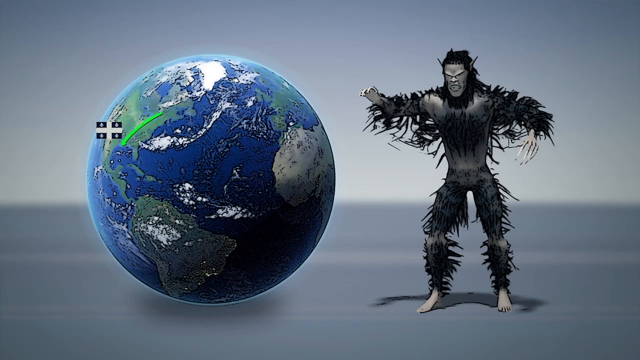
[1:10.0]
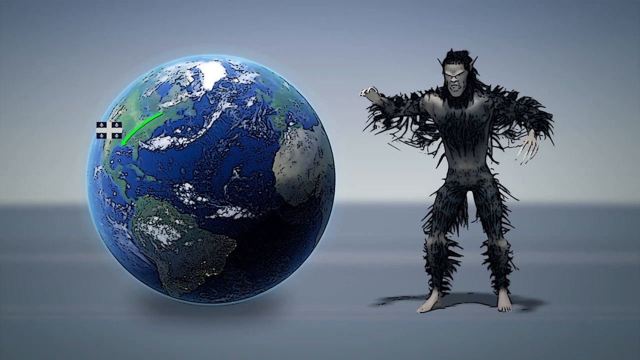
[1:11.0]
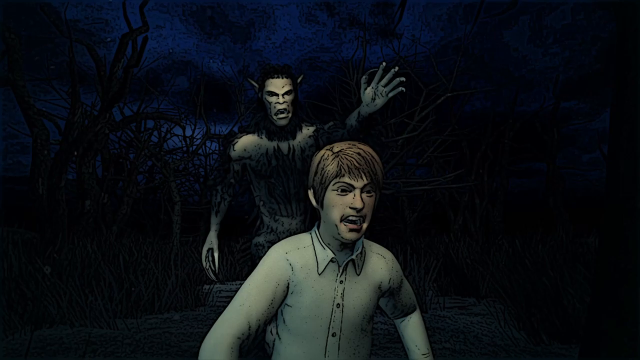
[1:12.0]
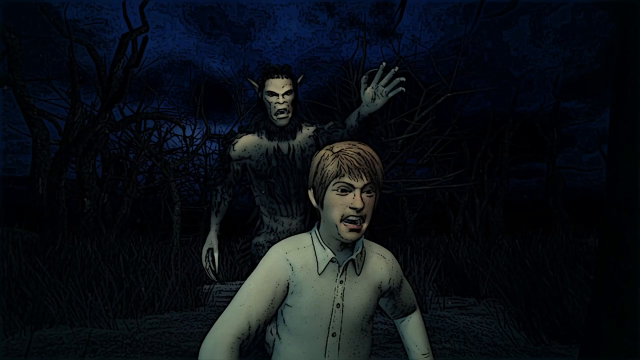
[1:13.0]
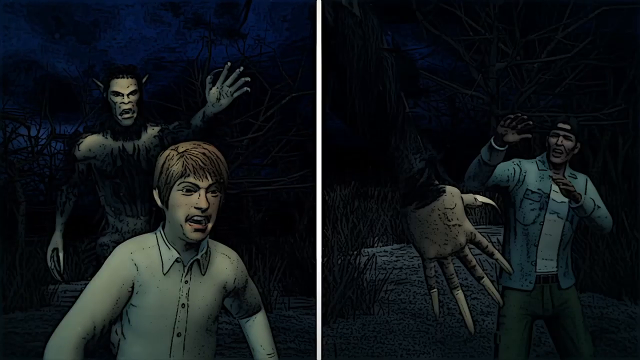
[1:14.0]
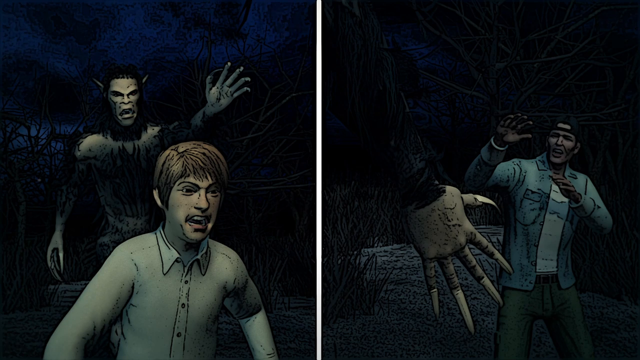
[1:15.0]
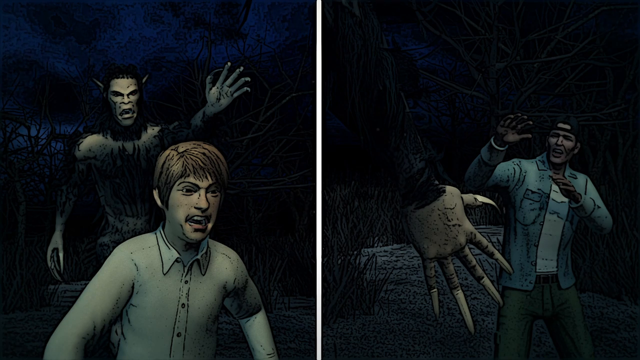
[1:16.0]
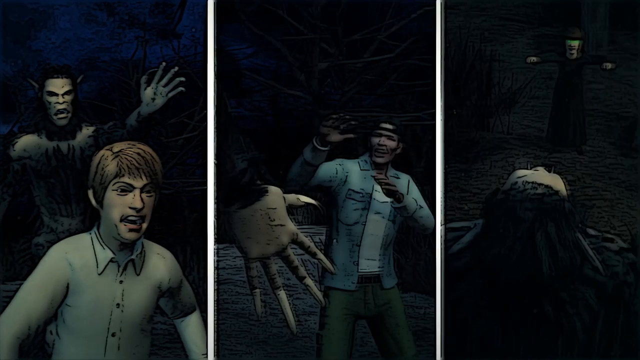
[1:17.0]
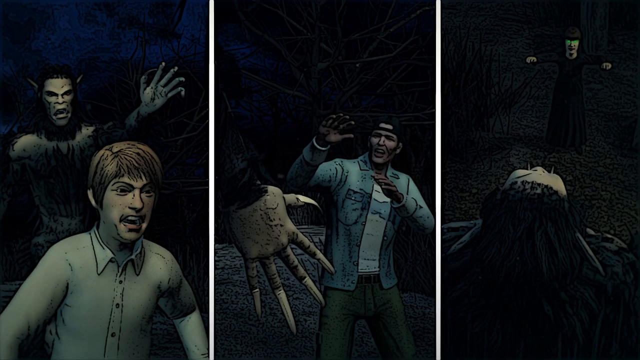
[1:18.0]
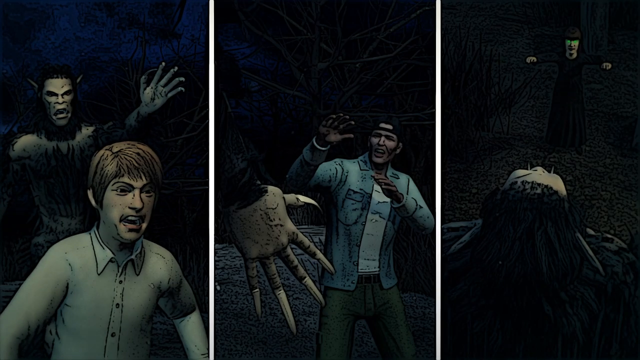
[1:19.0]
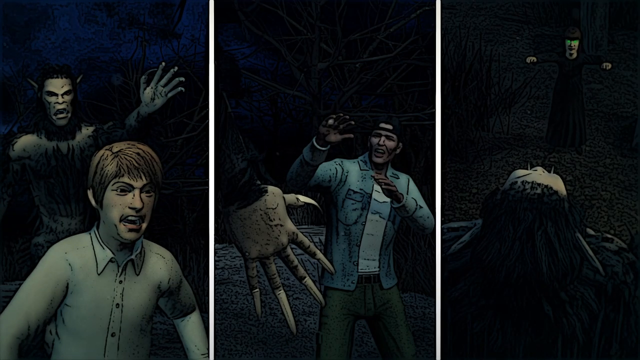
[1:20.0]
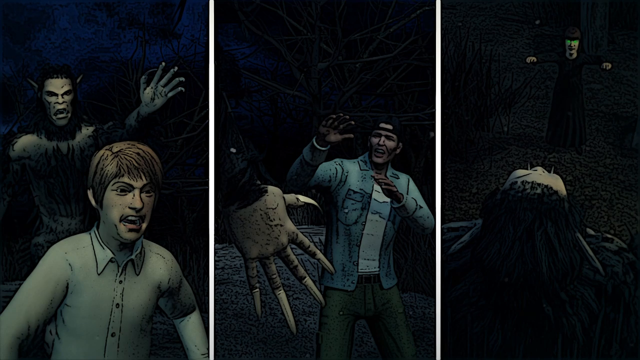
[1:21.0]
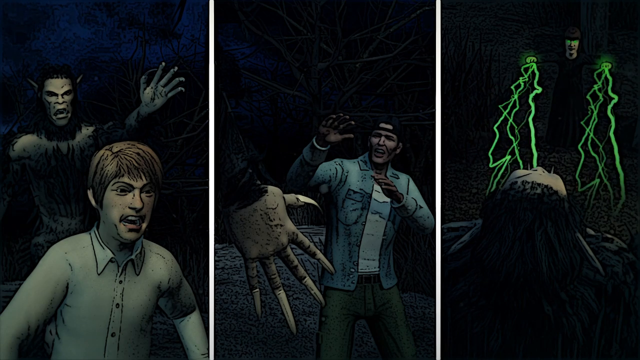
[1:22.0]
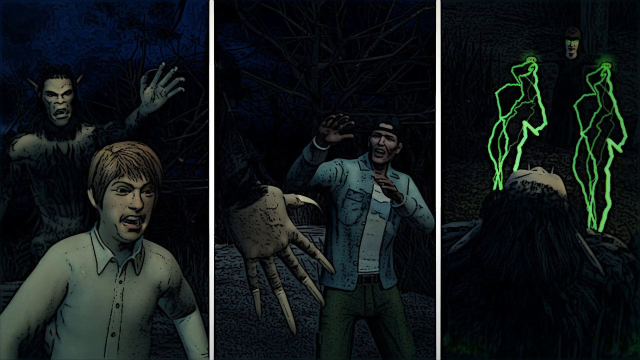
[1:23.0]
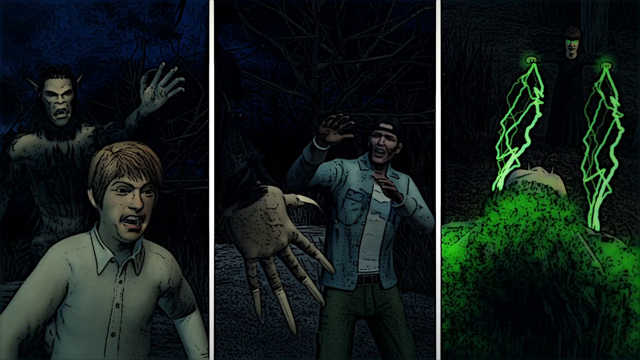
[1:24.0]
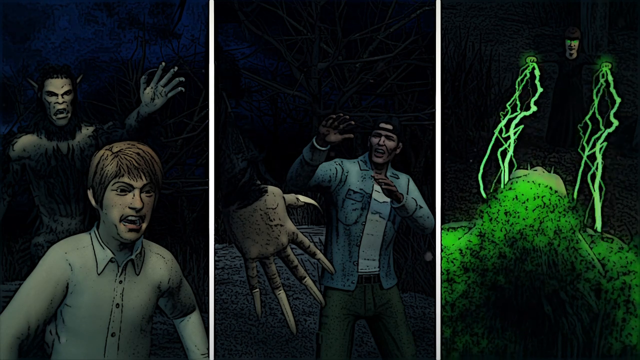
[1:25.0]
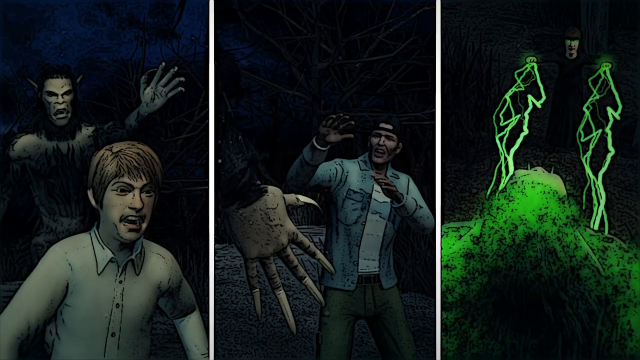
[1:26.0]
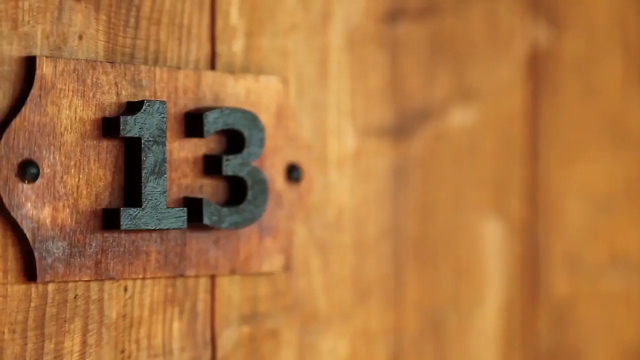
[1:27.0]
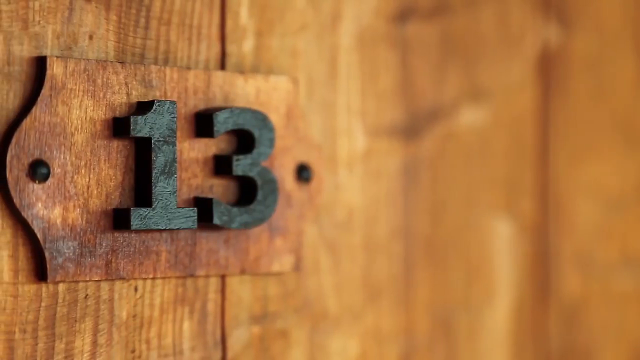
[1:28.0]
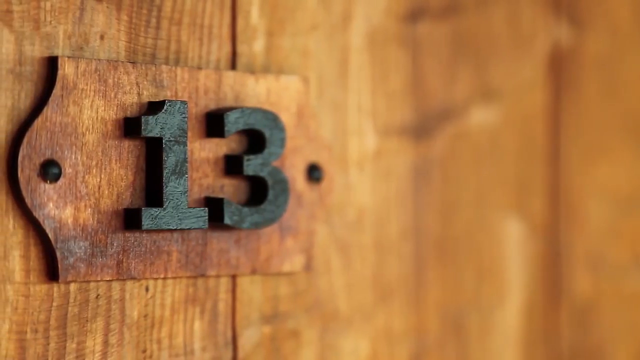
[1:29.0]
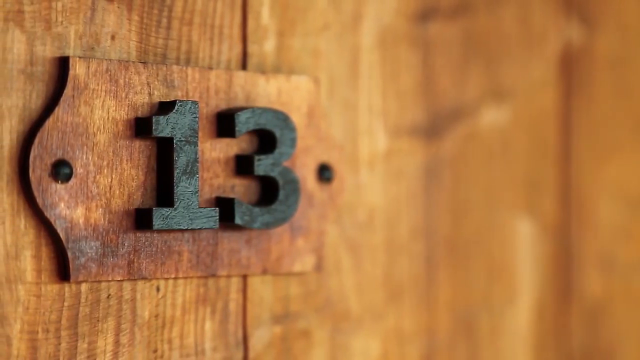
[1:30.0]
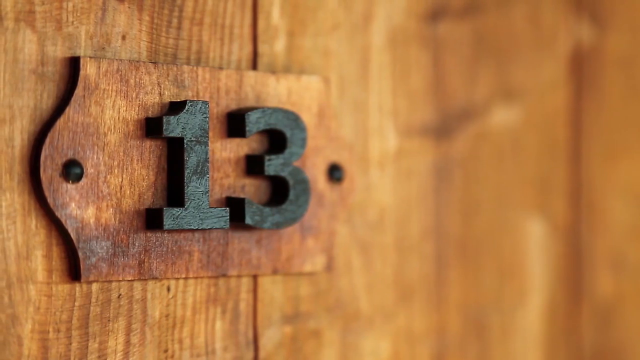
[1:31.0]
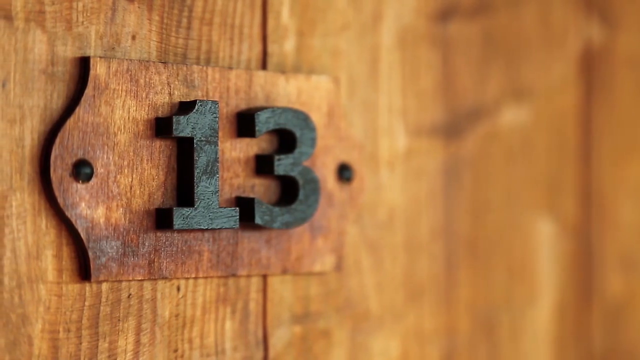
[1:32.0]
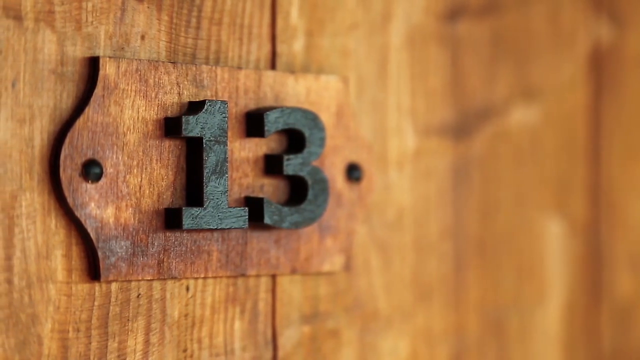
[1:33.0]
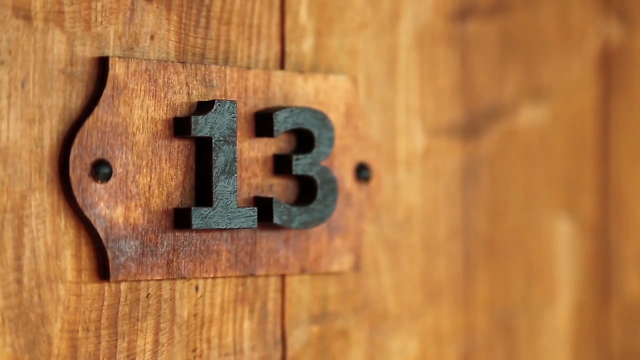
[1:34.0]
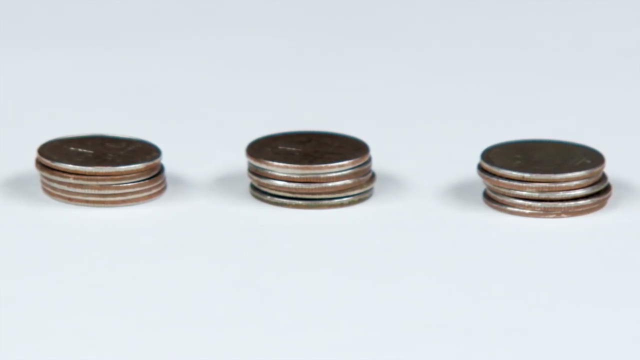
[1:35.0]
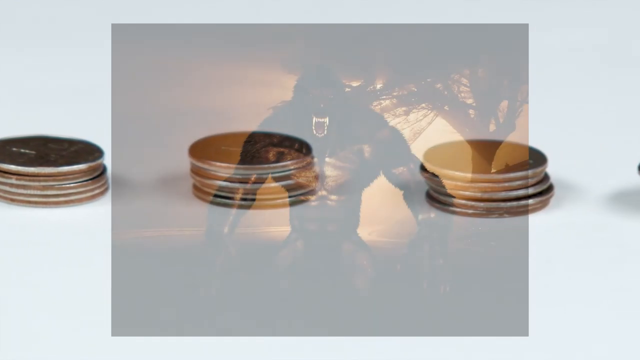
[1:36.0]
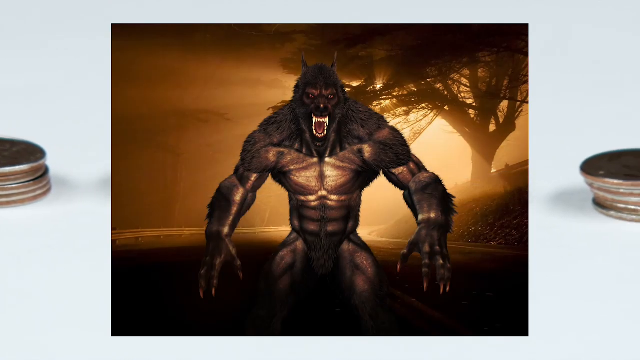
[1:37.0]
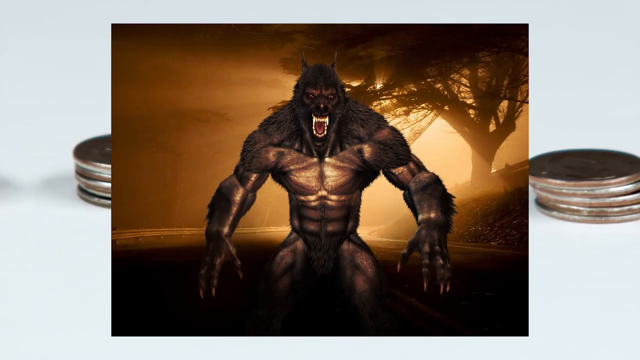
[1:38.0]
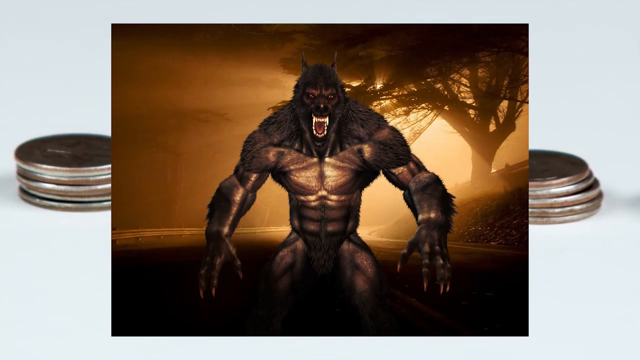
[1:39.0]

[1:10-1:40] A rough 3D model of a werewolf is on the right; its hair does not quite look like hair, more like lines taped on. On the left is a 3D model of the world with flags pointing from what appears to be Greenland to the southern United States. Then a werewolf chases somebody in a dark scene with an image that looks kind of cel shaded. Another scene shows the werewolf on a victim from the werewolf's point of view; the victim, wearing a denim jacket, looks scared and puts his hands up. Another victim also looks scared. Someone like a wizard zaps the werewolf with green lightning coming out of their hands. Next, a room appears with the number 13 carved in wood, like a label on a door. Then a stack of coins and a picture of the werewolf appear.